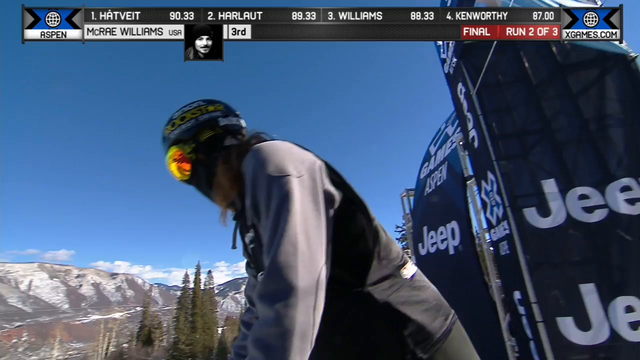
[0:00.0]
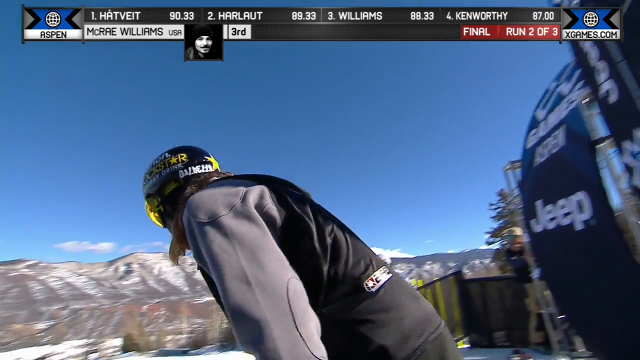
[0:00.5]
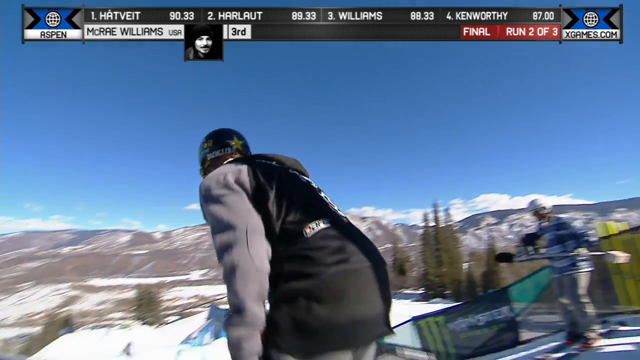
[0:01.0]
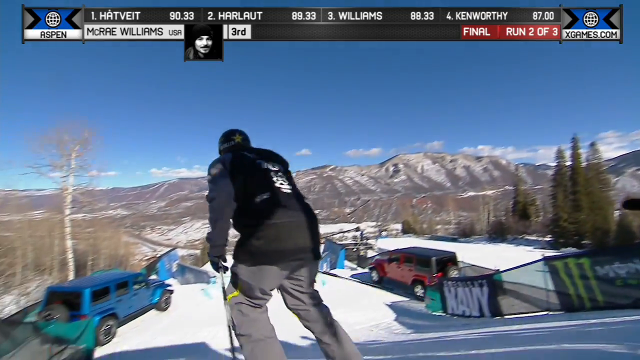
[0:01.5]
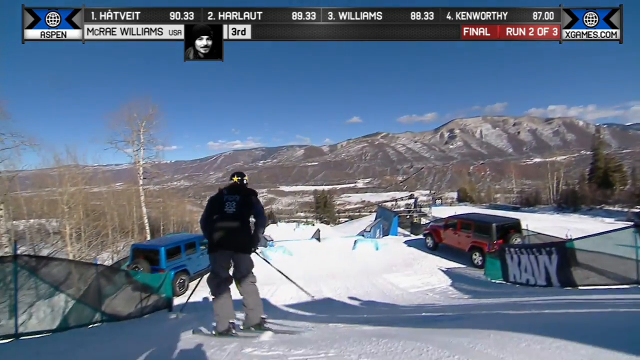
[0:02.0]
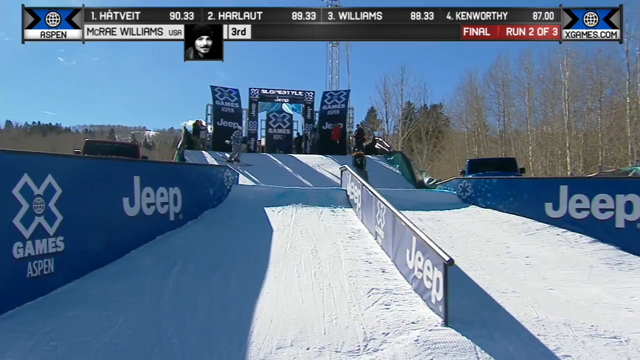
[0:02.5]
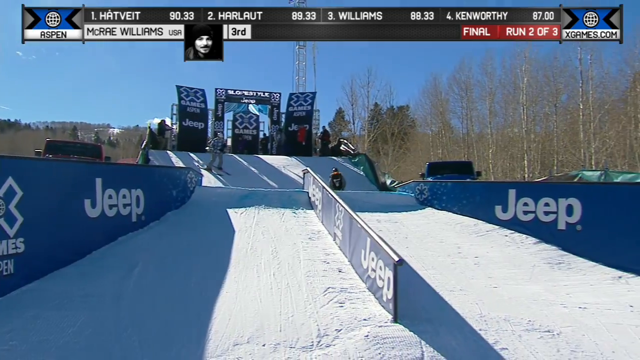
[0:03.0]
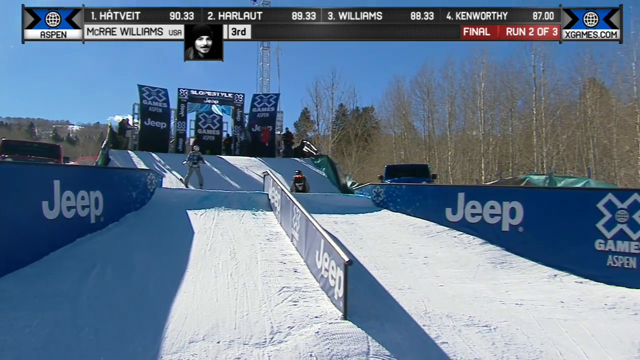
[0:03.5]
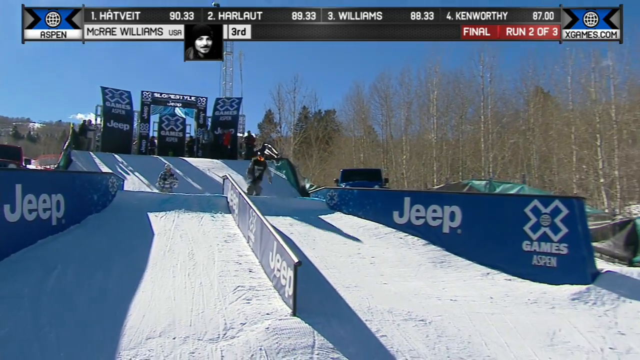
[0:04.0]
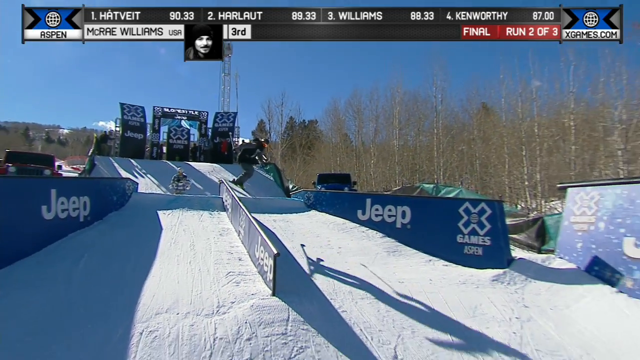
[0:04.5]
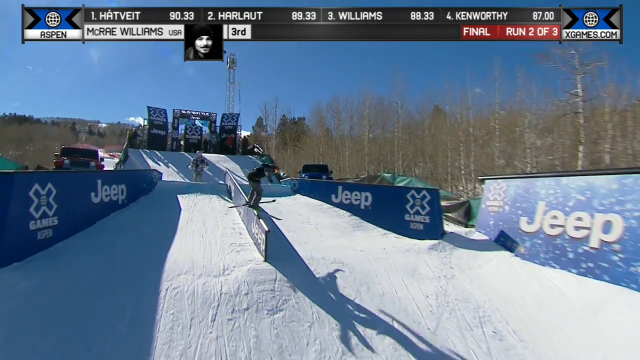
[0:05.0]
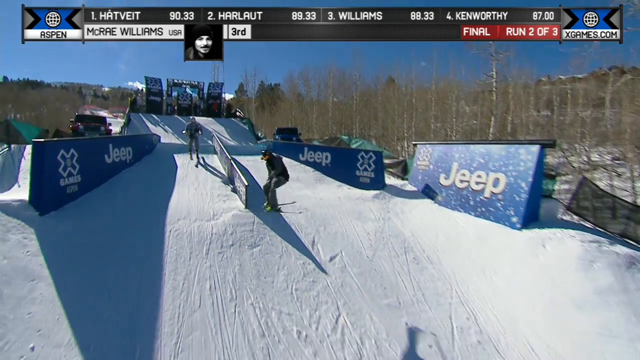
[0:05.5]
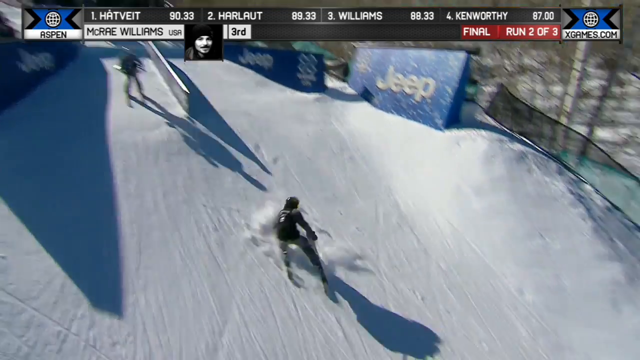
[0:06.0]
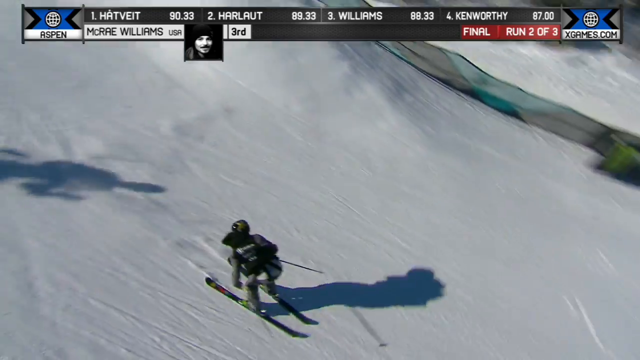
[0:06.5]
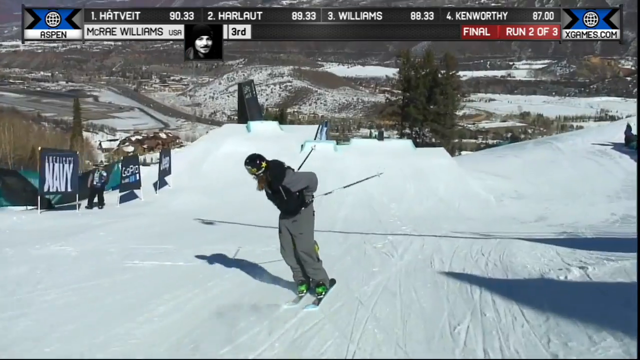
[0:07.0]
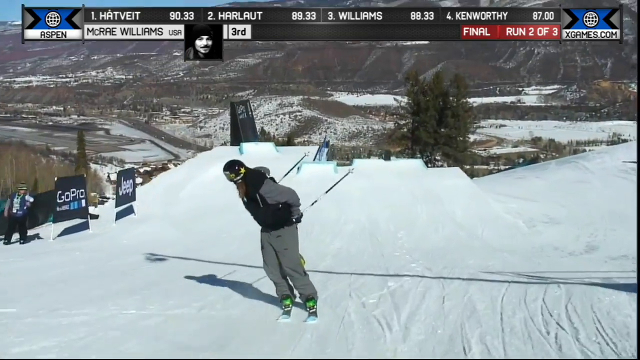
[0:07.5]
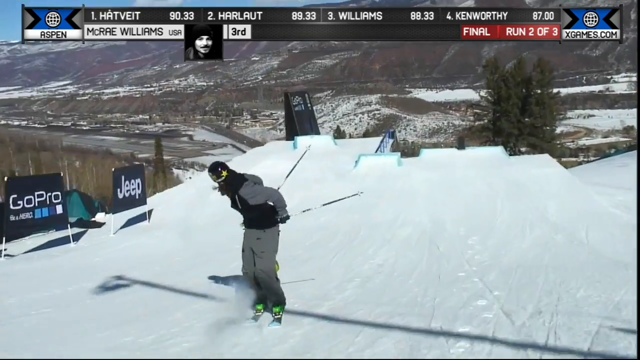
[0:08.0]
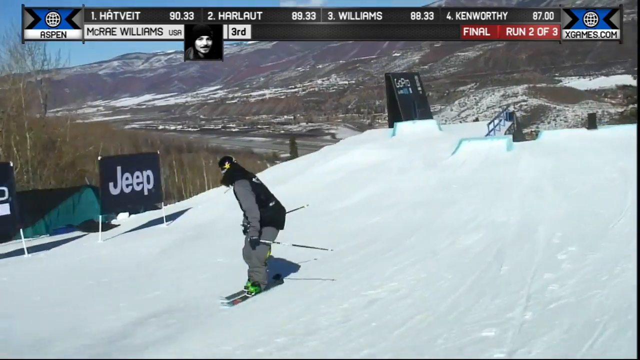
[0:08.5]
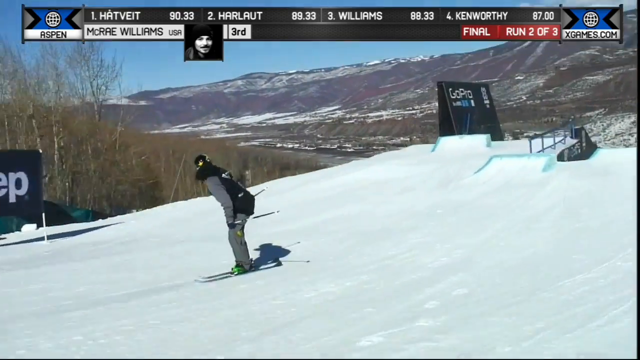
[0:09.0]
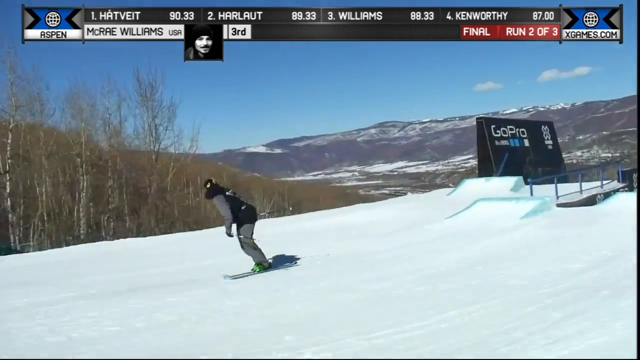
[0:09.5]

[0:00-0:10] On a ski slope, a man, a skier wearing a gray ski suit with a black vest, a black helmet and yellow opaque goggles over his eyes, gets ready to ski down the snowy slope. He sets off and skis downward past blue barricades that all carry the Jeep logo and a logo for the X Games, the venue for this competition. The skier hops up onto a grind rail and grinds along it on his skis; this is an extreme skiing competition rather than a typical one. He then looks backwards and begins skiing backwards down the slope.